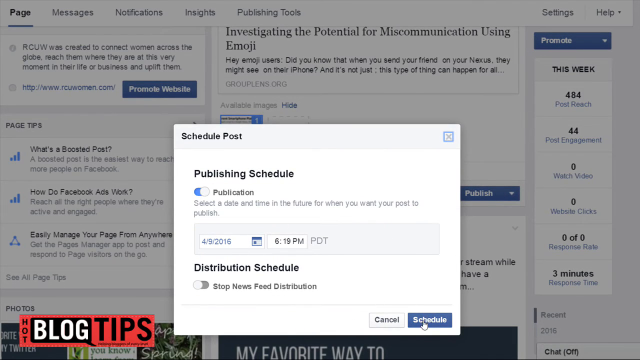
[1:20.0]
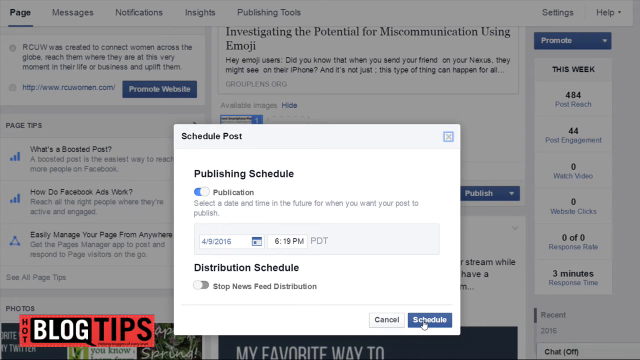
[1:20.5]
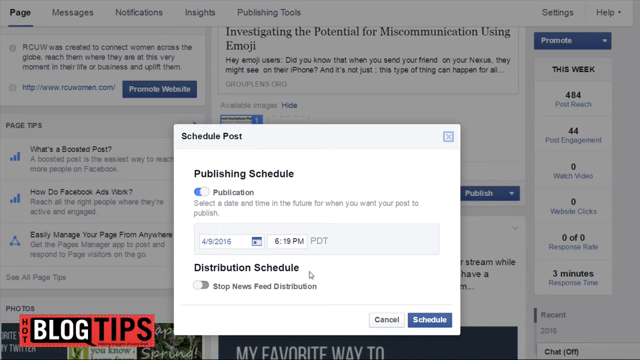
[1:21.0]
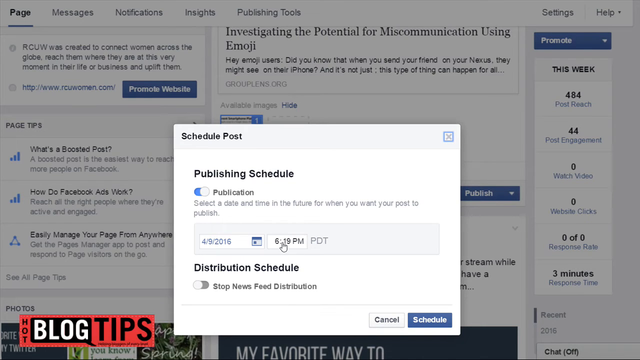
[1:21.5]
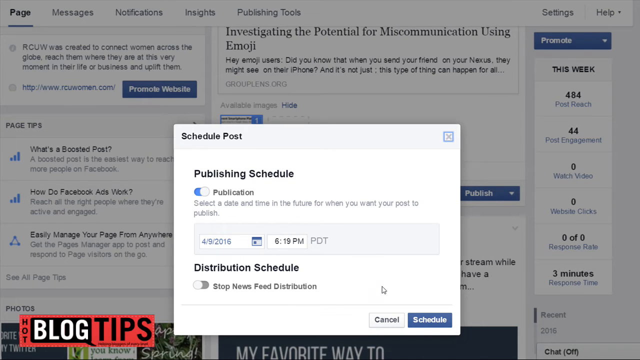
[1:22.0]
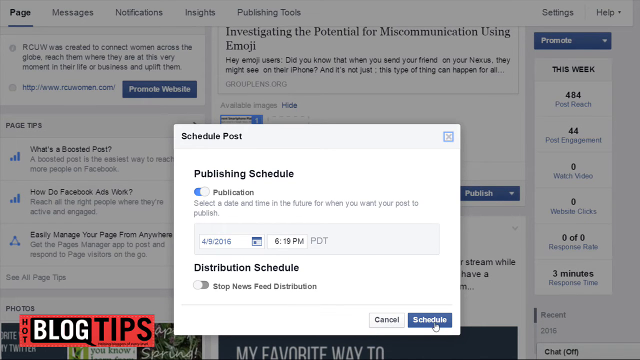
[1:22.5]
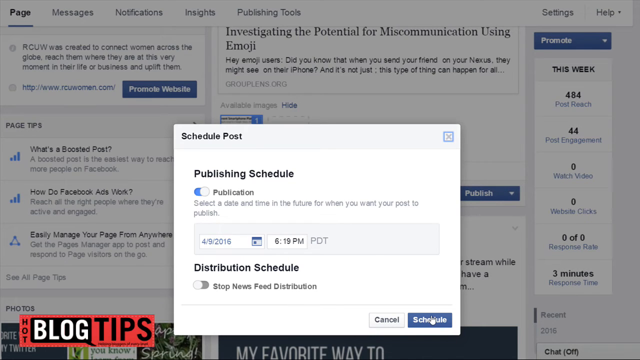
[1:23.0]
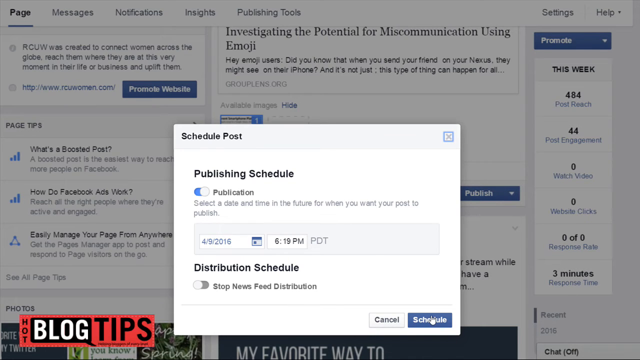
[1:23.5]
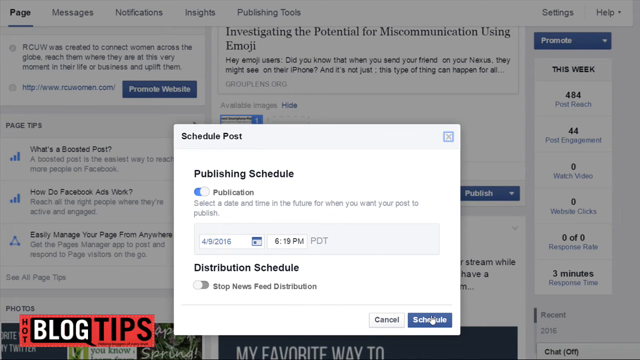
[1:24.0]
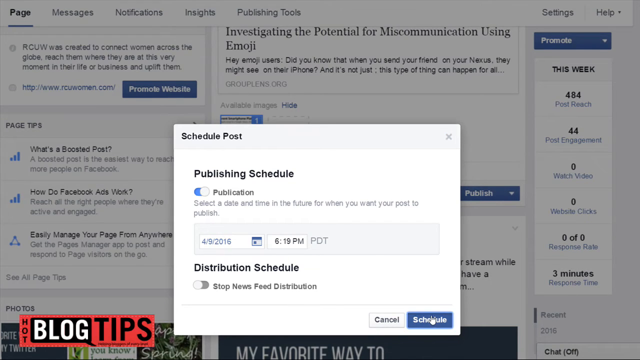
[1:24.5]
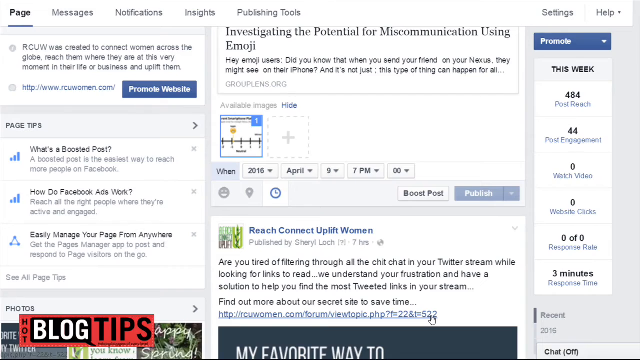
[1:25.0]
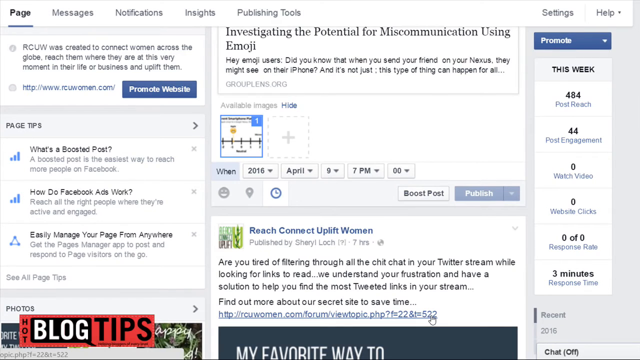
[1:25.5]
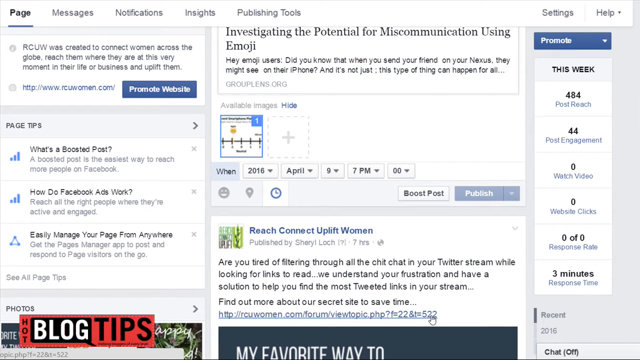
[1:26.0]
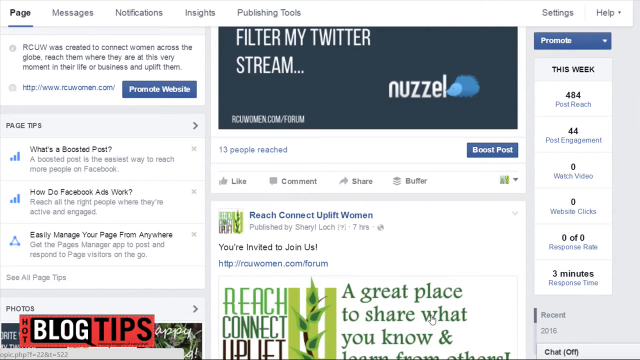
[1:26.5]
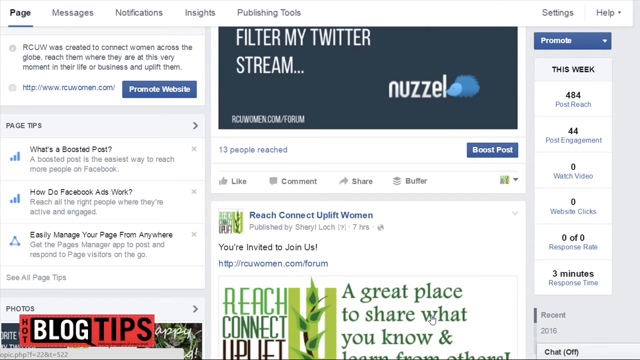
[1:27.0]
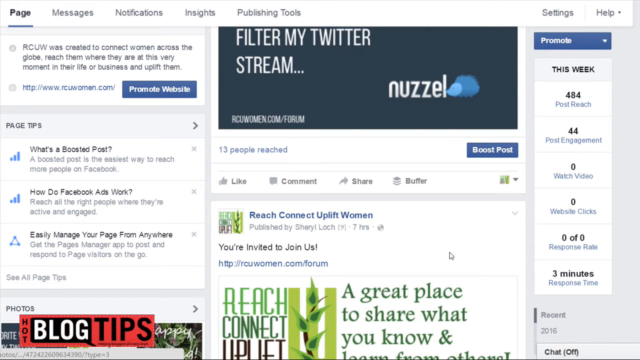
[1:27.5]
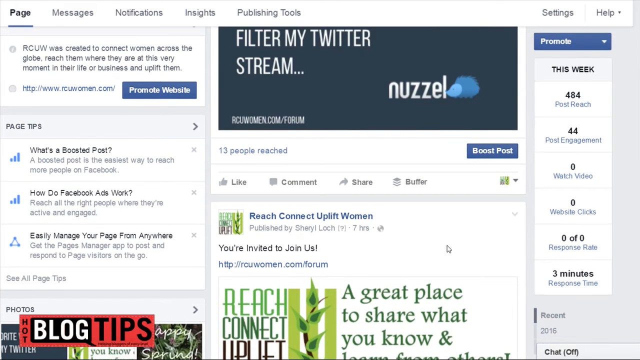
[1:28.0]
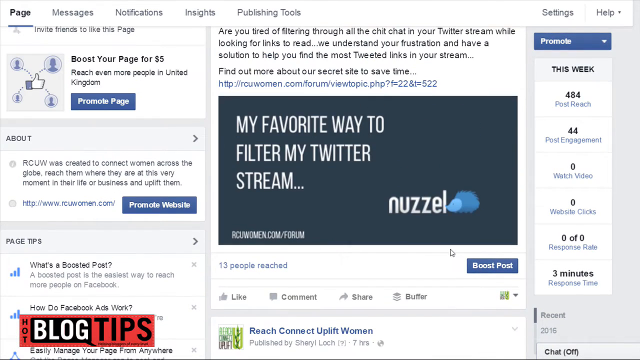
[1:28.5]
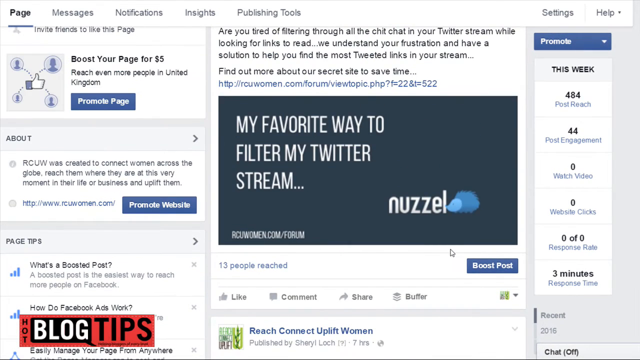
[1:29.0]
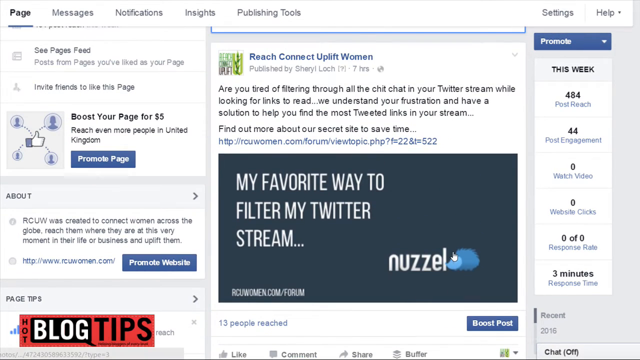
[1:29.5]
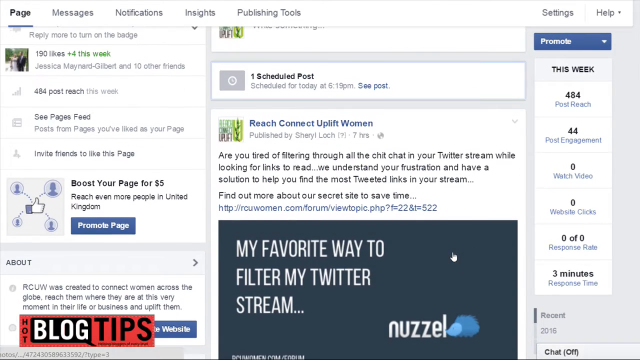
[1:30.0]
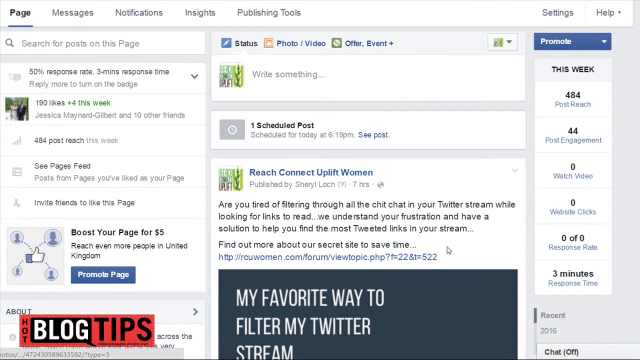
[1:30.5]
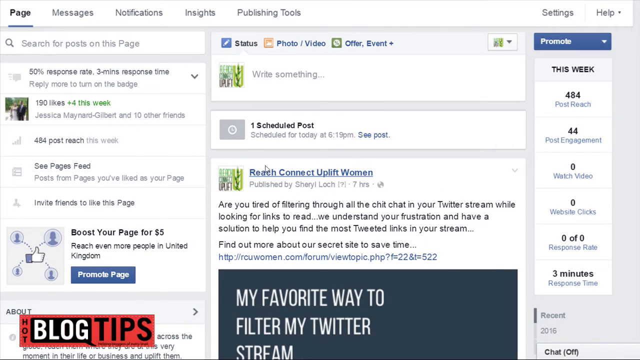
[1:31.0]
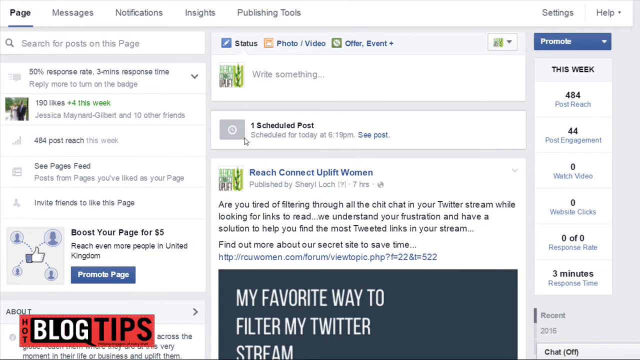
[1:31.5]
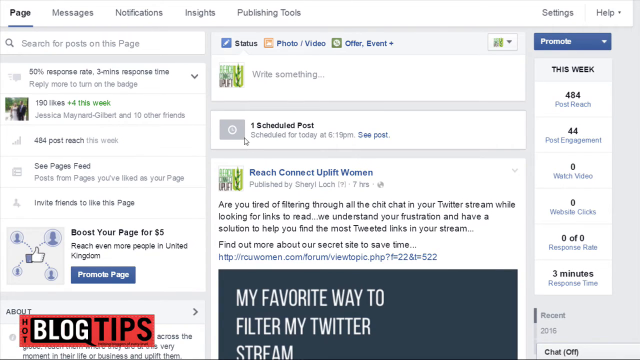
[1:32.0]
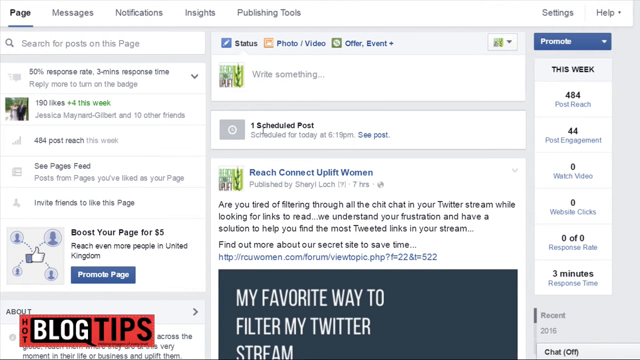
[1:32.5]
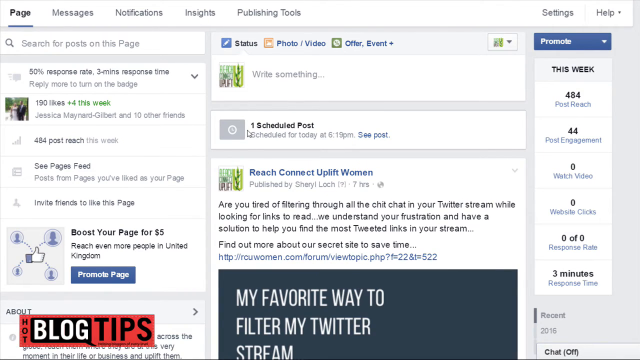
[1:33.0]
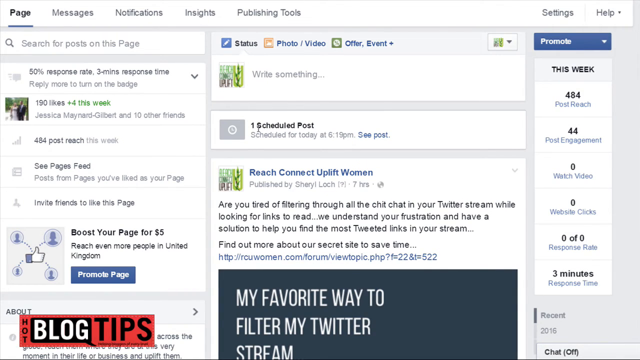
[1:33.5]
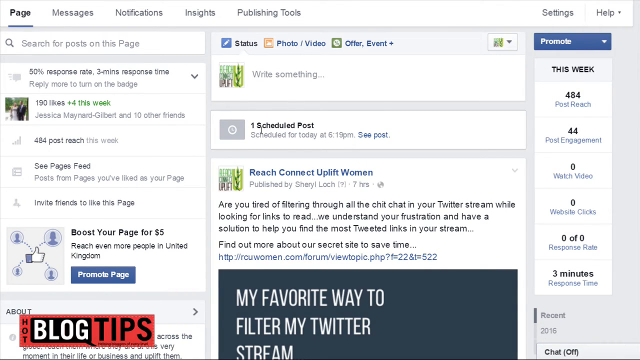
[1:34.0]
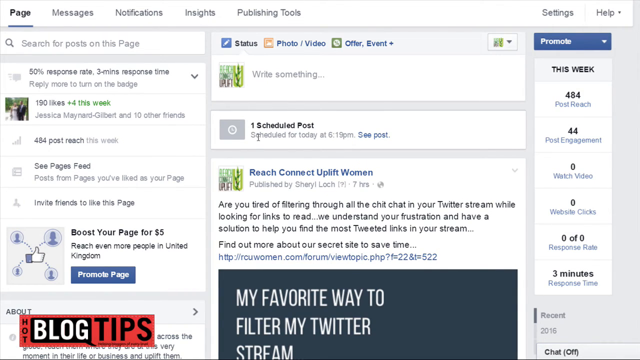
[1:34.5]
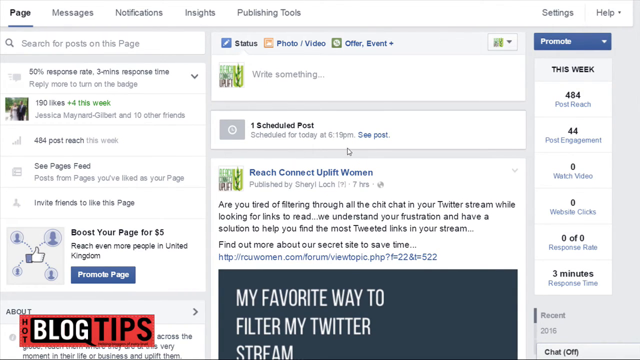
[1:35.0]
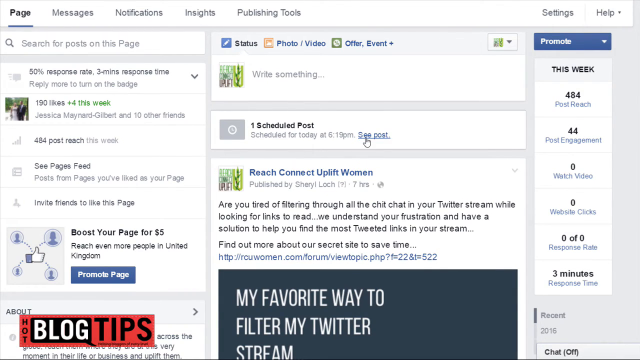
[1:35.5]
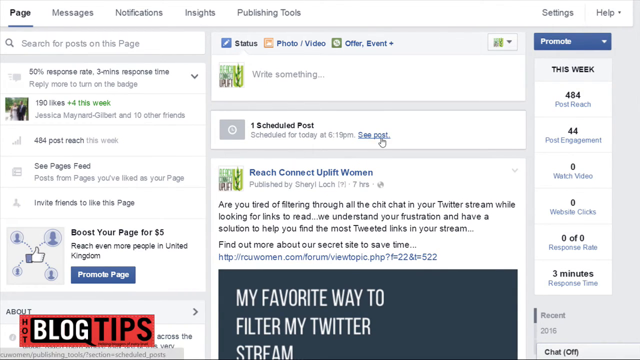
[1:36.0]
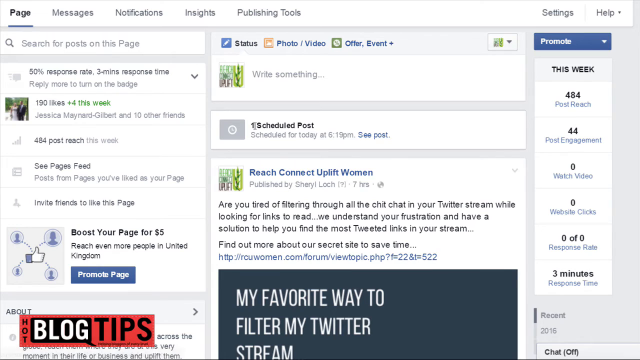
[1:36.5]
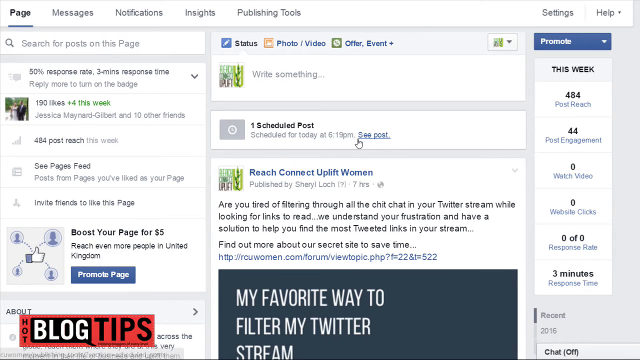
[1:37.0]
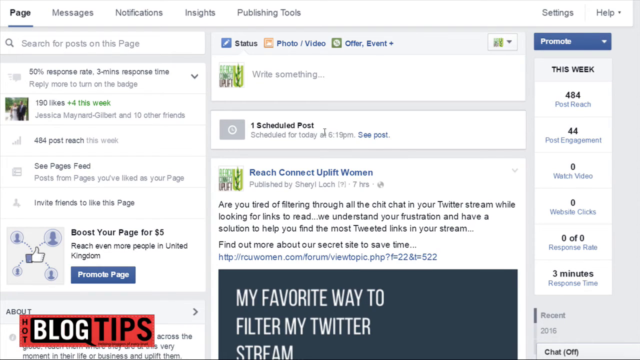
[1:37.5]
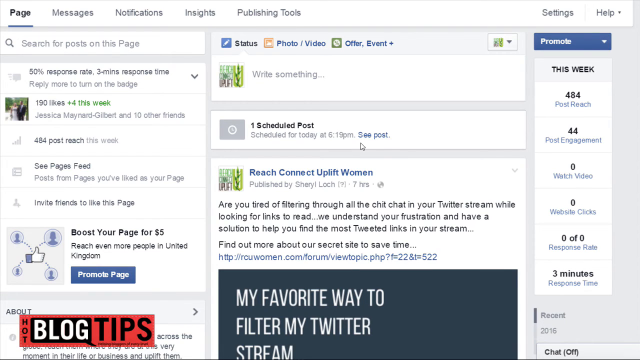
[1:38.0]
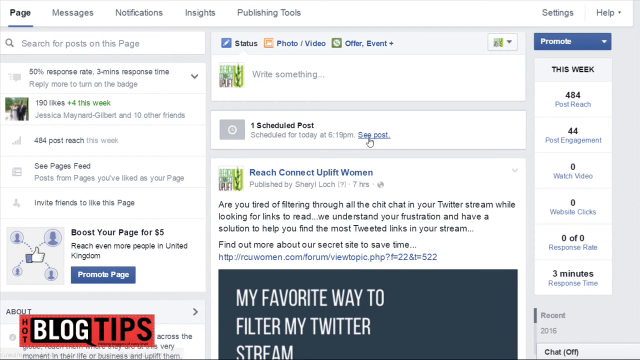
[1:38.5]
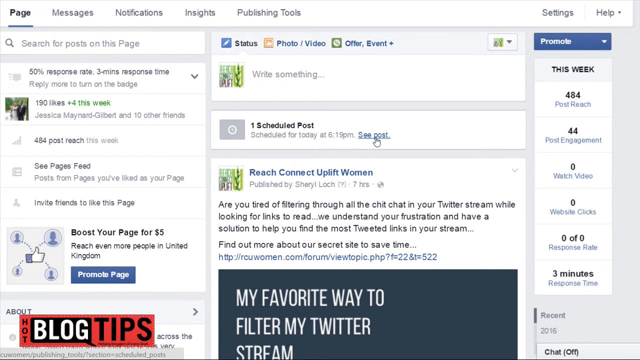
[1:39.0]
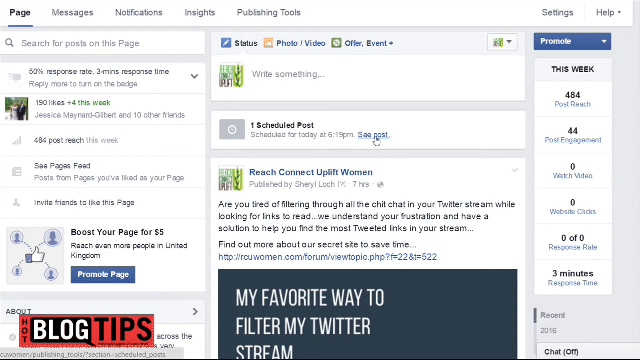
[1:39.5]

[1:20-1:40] The schedule post window is up. It says "publishing schedule" with the toggle on and all the information filled in. A "distribution schedule" setting is toggled off, and "stop distribution" is also off. The mouse hovers over schedule and clicks the button. The user then scrolls up to the top of the feed, where it says "one schedule post, schedule for today at 6:19 p.m.", with a highlighted option to see the post; right underneath is what looks like a separate post. The user highlights the scheduled information, going back and forth between "see post" and the schedule post text to show that it is there.